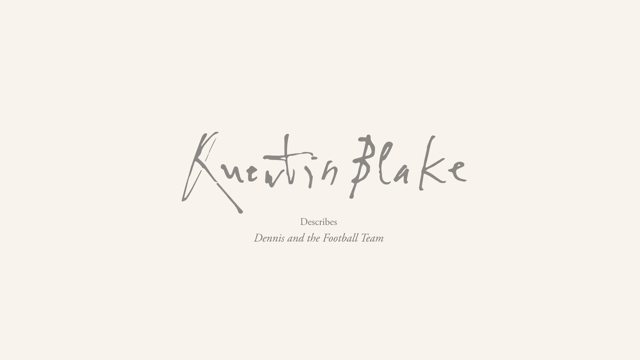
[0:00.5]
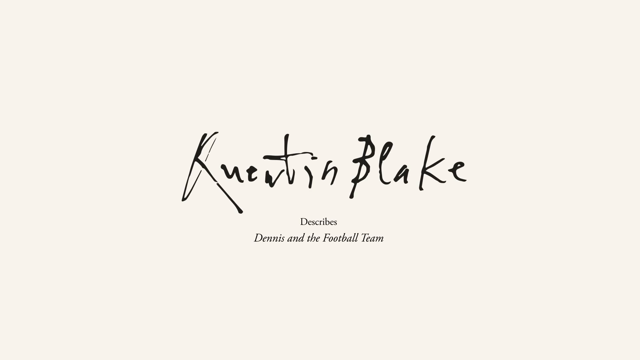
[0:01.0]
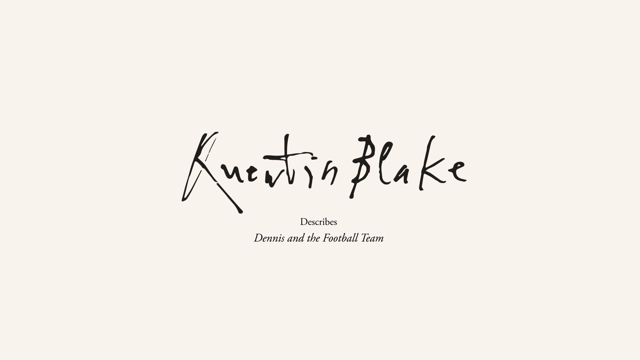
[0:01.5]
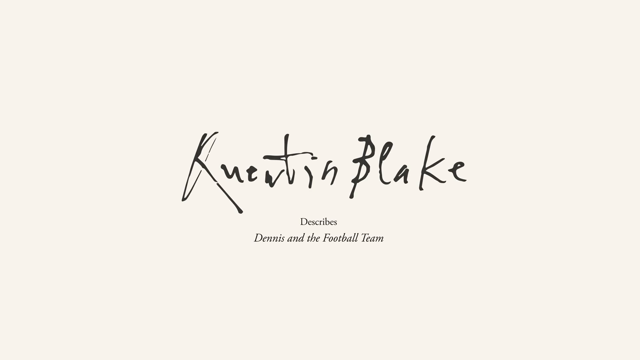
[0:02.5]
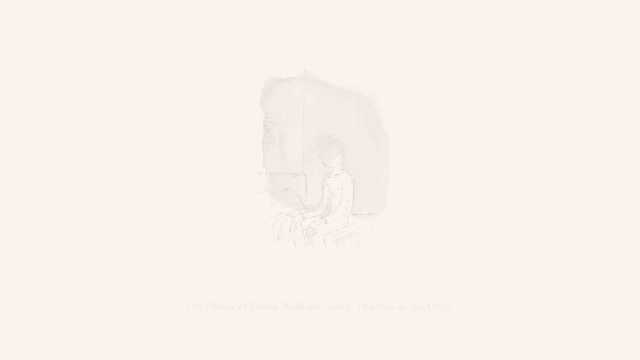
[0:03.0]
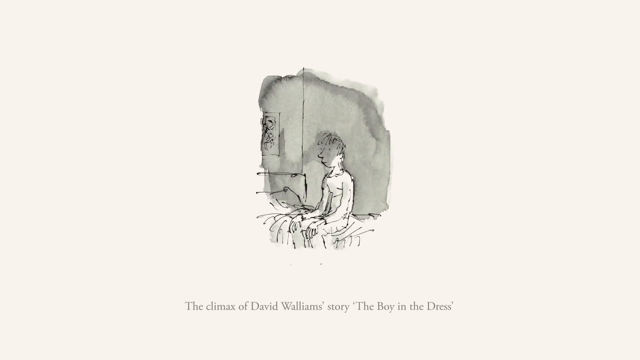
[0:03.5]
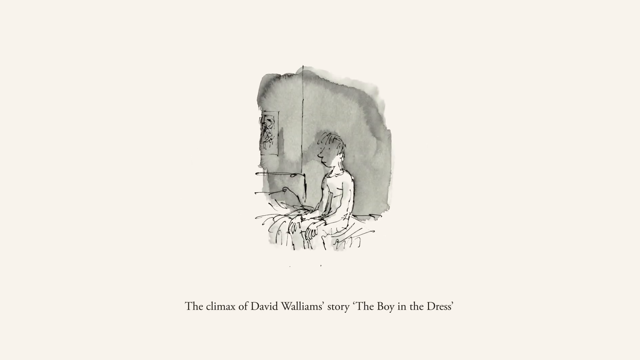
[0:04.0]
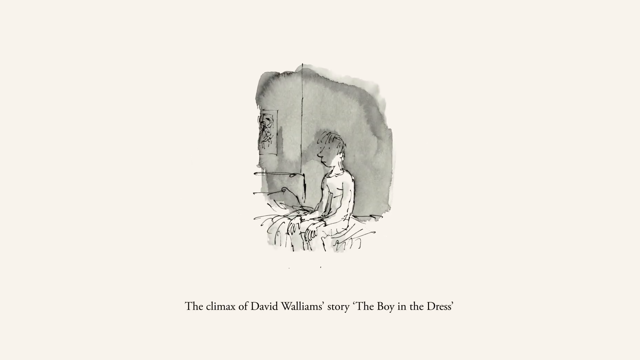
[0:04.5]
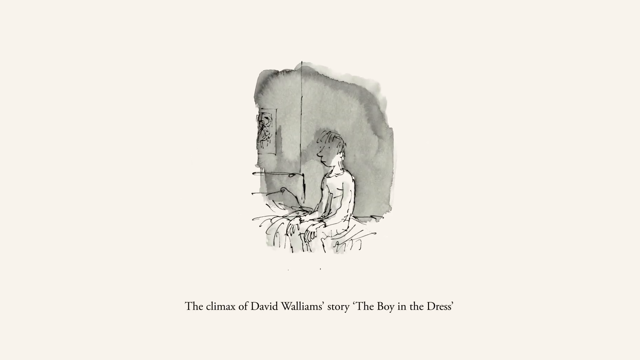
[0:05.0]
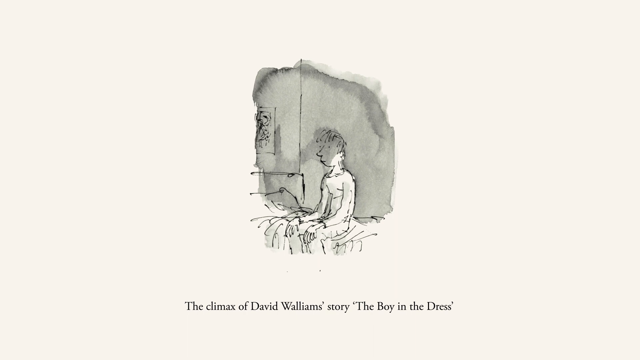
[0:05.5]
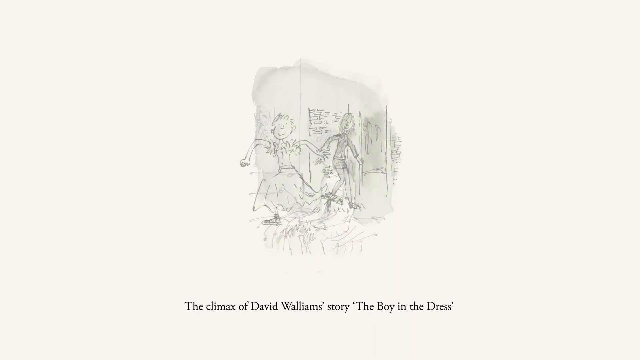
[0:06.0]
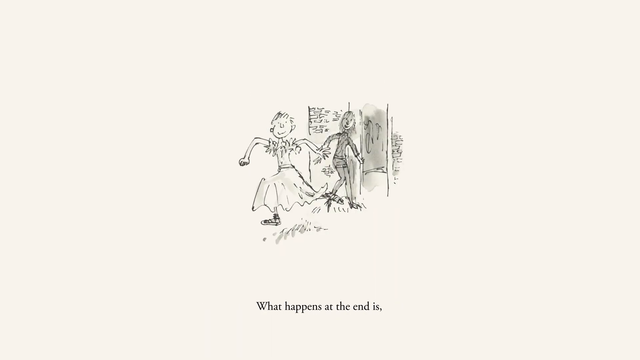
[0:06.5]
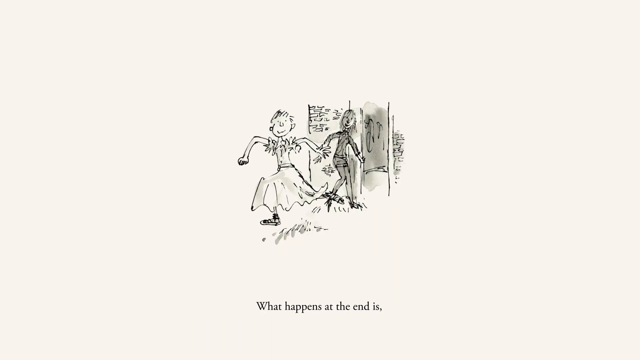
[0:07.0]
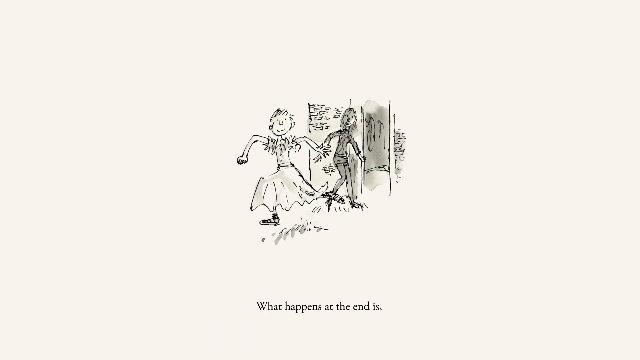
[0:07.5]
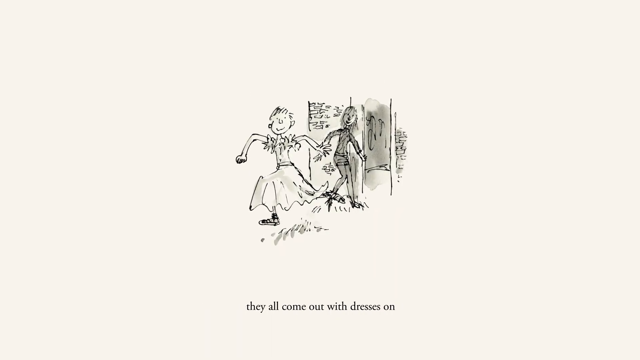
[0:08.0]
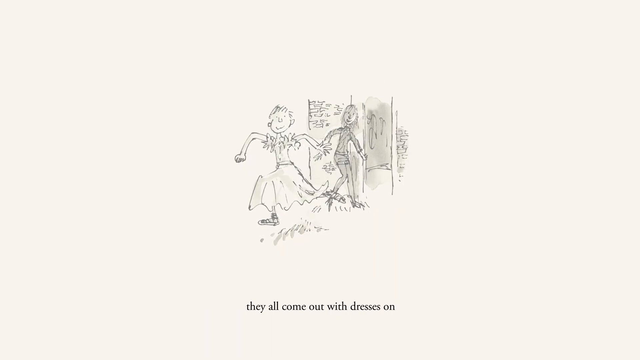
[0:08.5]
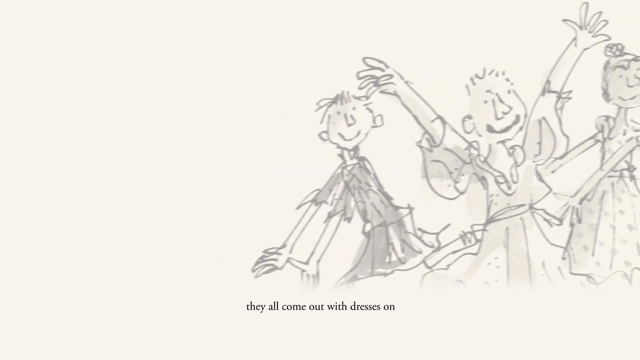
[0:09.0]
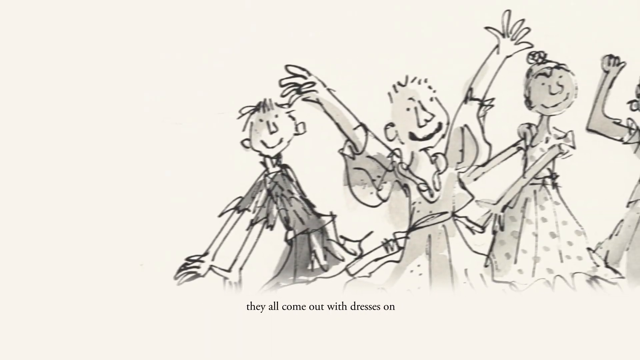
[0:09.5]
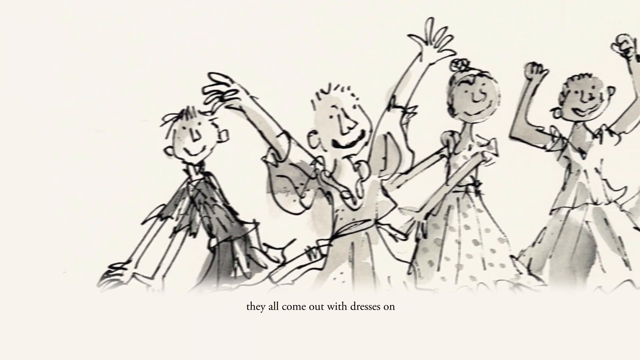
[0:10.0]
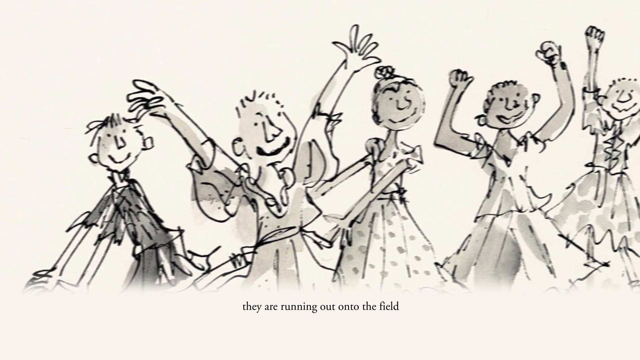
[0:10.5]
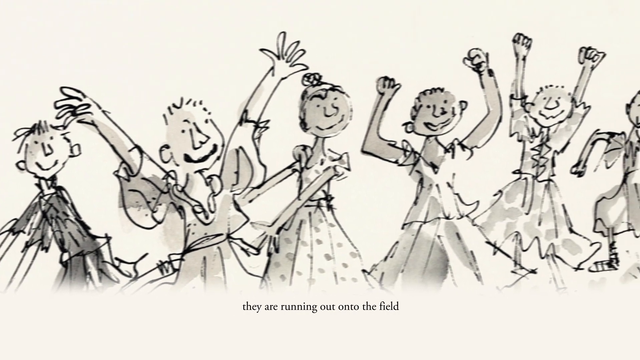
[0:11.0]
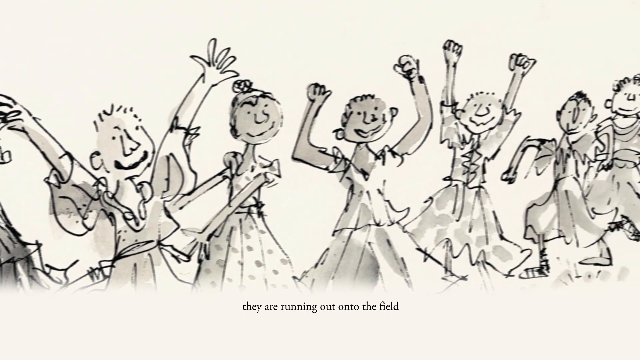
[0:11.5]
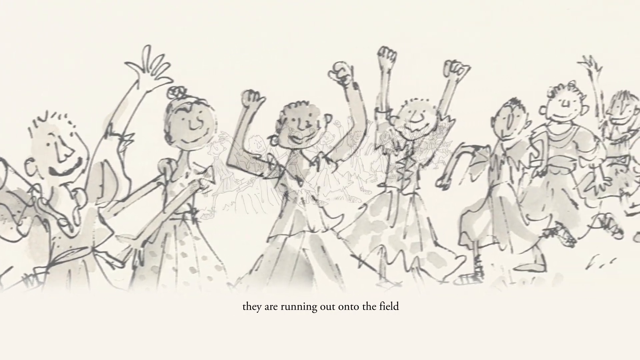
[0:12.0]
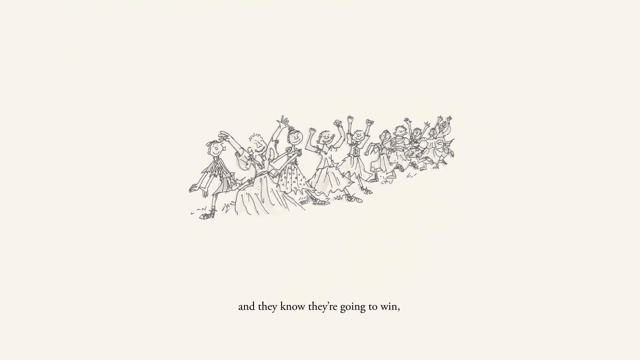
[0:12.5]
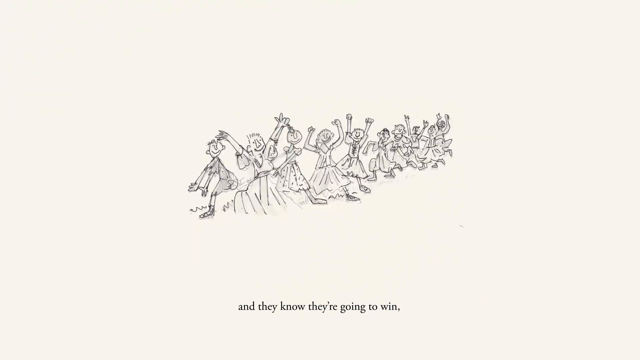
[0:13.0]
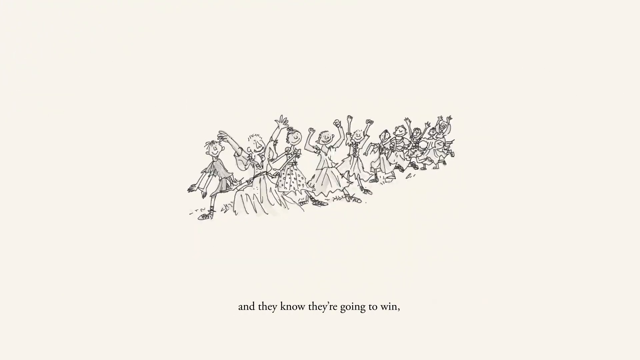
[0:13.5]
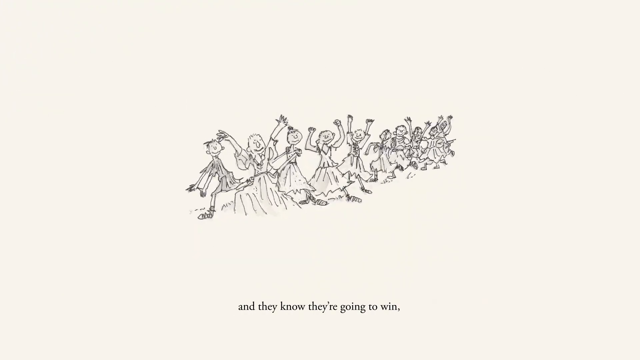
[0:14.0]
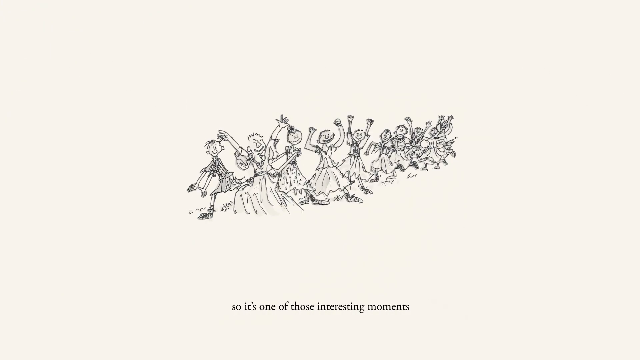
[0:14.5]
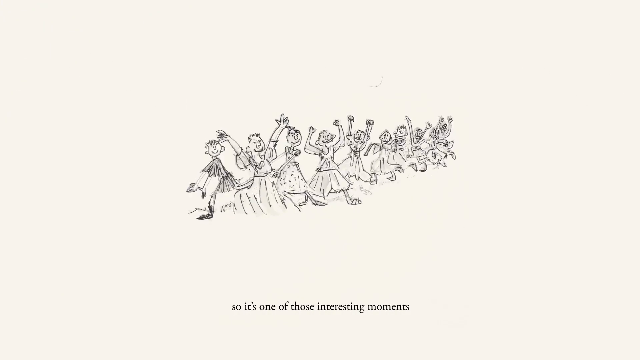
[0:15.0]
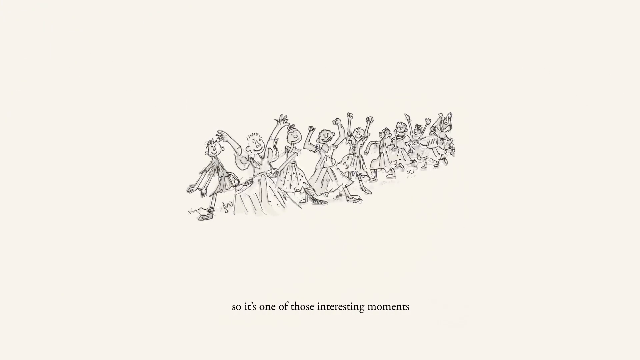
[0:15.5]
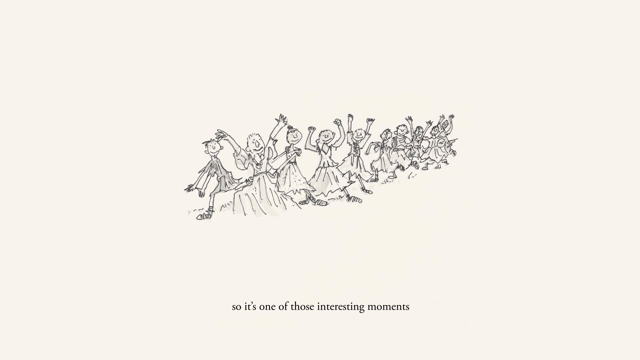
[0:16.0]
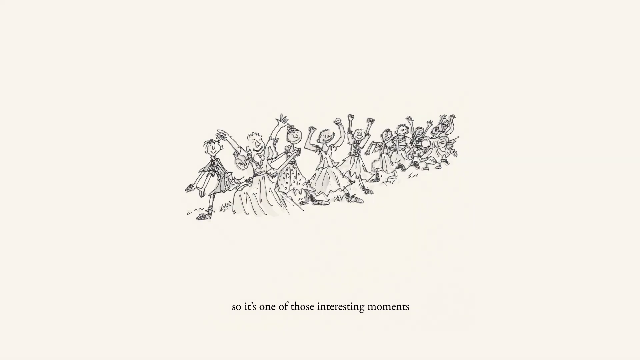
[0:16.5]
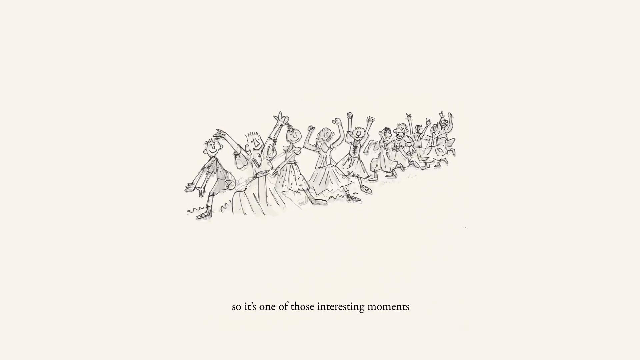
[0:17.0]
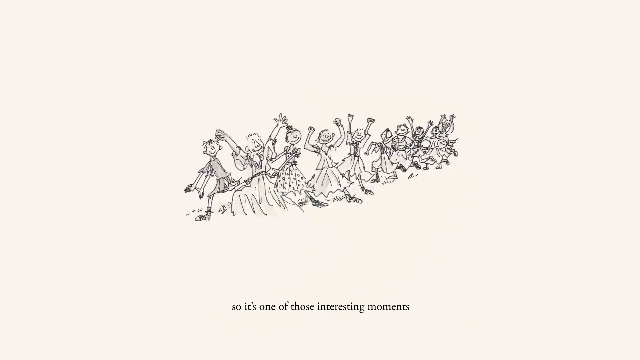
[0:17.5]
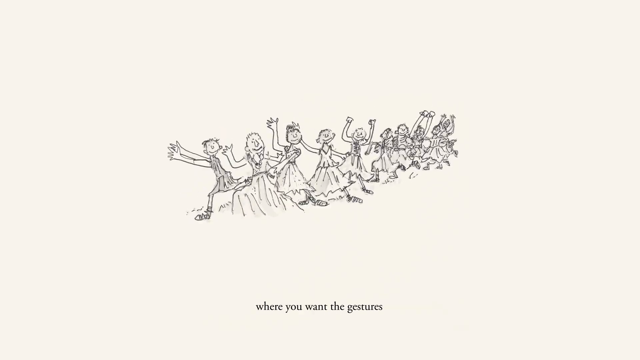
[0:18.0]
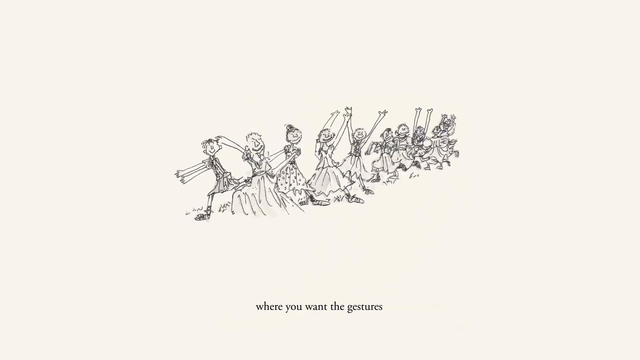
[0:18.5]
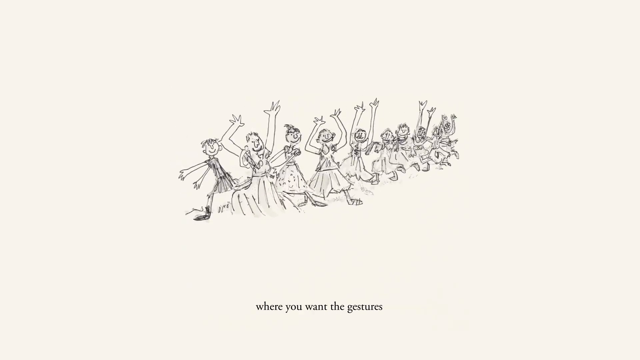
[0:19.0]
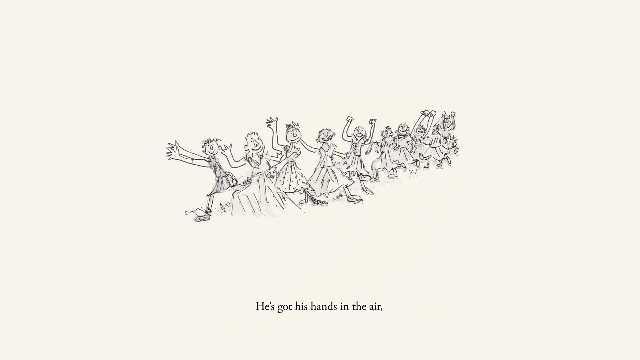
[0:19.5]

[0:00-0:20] The video opens on a beige background that fades into black at the bottom. It comes back with a name written in script, "Quinton Blake," and then text in a different font reads "describes Dennis and the football team." This fades into a picture of a young boy that looks like a pencil drawing in a book. The boy is sitting on his bed by himself and looks a little sad, and the text underneath reads "the climax of David Williams' story, The Boy in the Dress." The scene changes and text reads "what happens at the end," over another pencil drawing of a young boy running forward with a dress and tennis shoes on. In the background, in the house, is what appears to be his mother or an older lady with longer hair and jeans on, smiling as the boy leaves in the dress. Figures with dresses are running out on the field, and the pencil-drawn figurines gesture with their arms in the air.